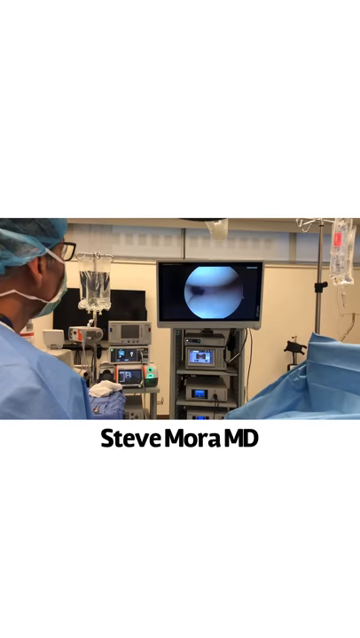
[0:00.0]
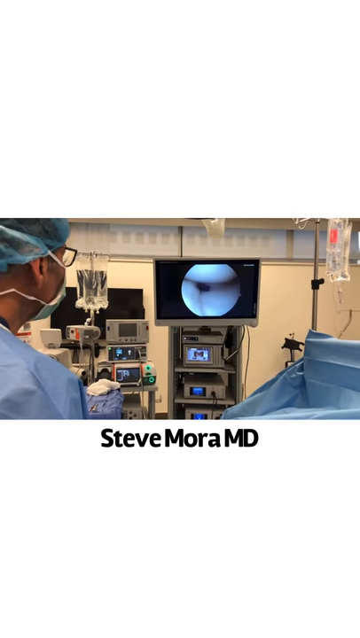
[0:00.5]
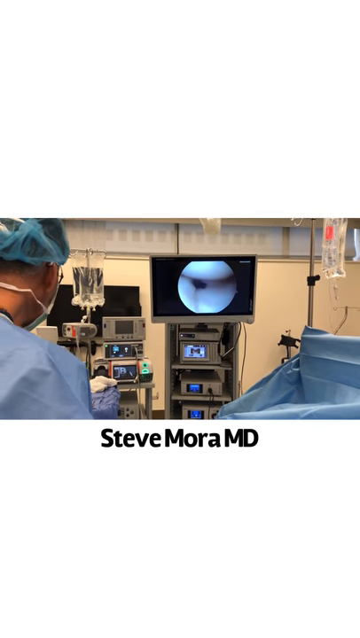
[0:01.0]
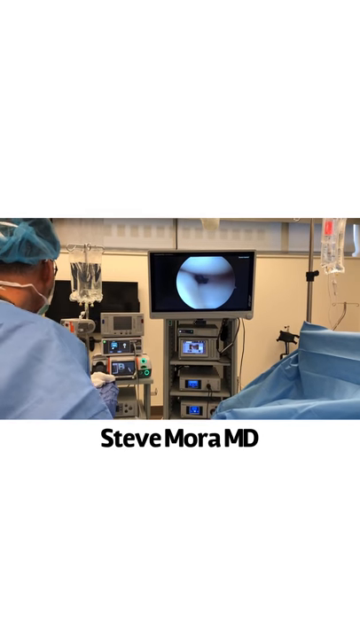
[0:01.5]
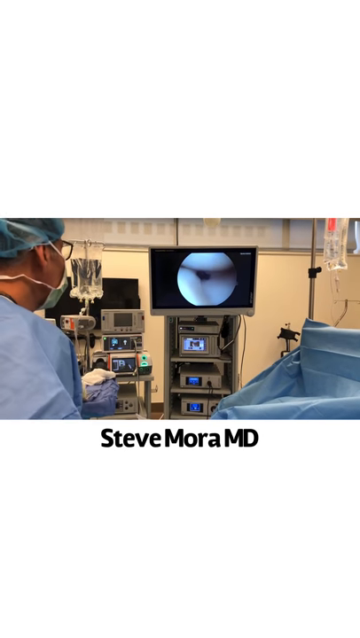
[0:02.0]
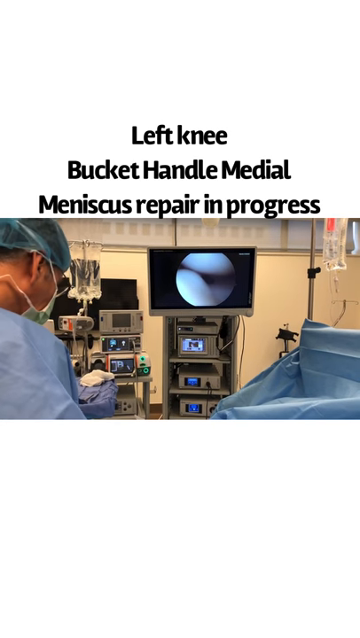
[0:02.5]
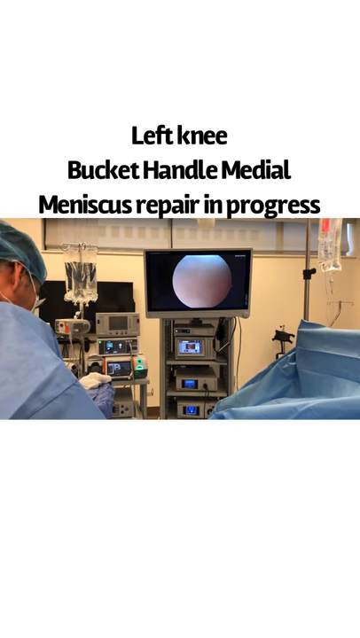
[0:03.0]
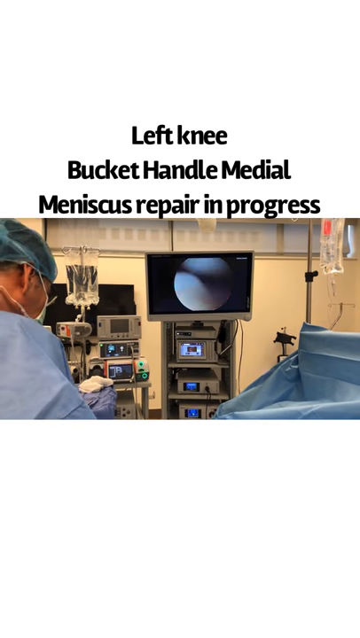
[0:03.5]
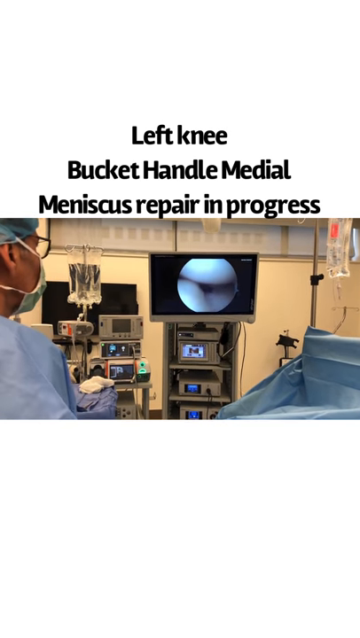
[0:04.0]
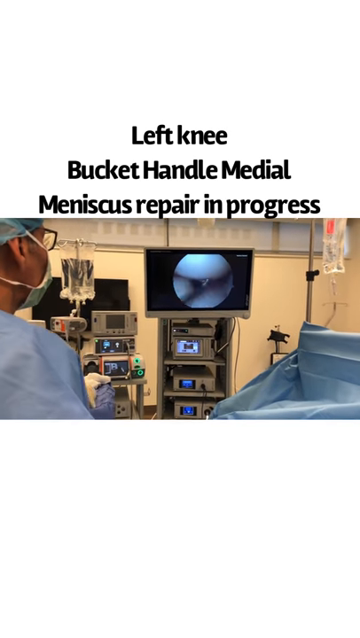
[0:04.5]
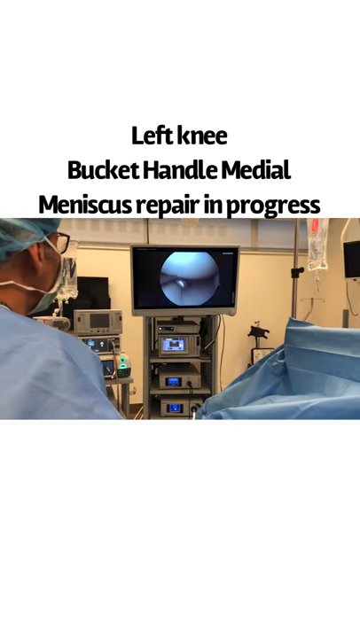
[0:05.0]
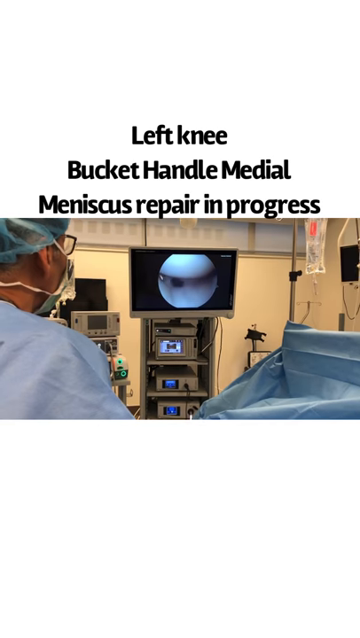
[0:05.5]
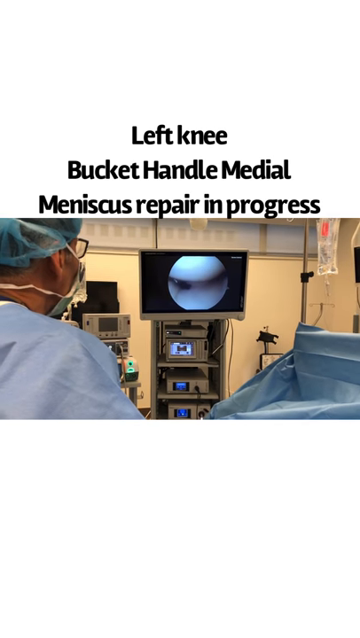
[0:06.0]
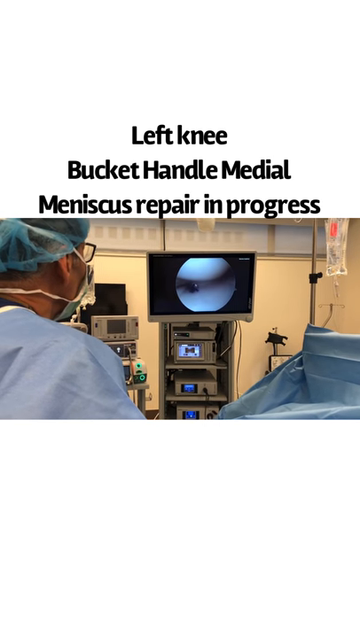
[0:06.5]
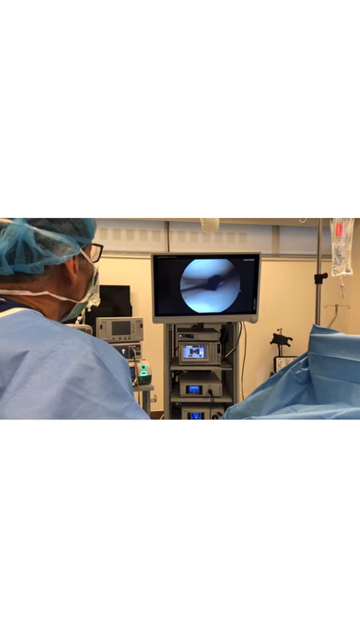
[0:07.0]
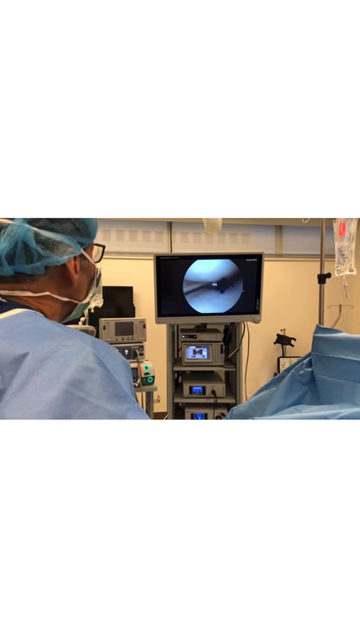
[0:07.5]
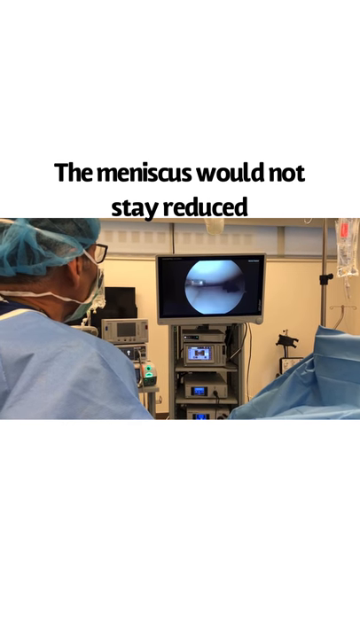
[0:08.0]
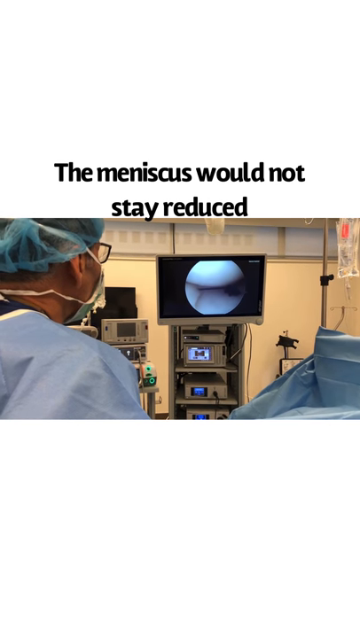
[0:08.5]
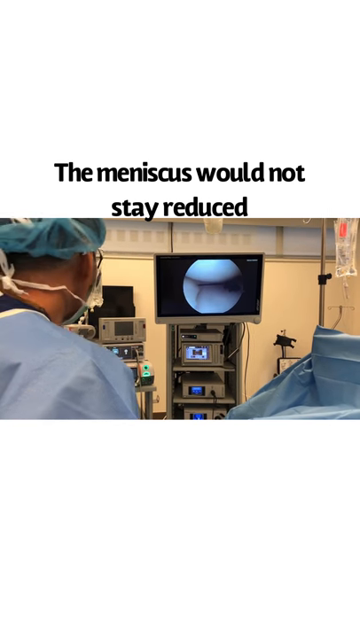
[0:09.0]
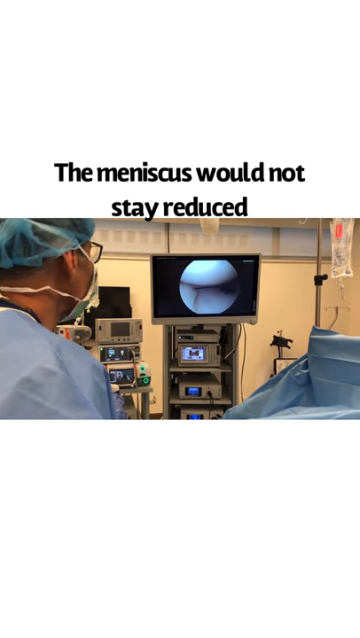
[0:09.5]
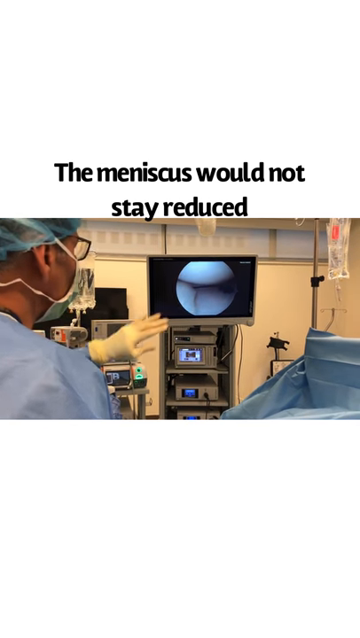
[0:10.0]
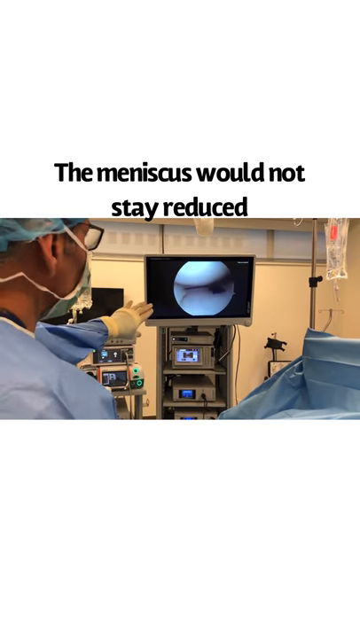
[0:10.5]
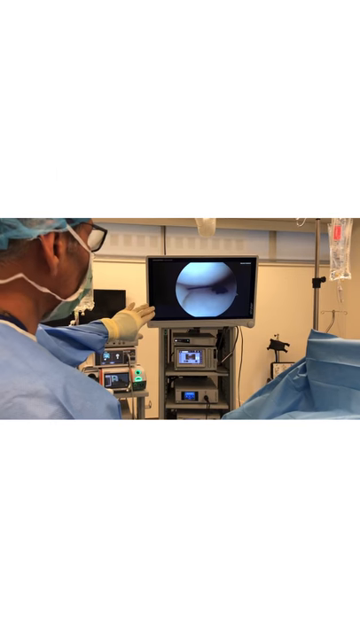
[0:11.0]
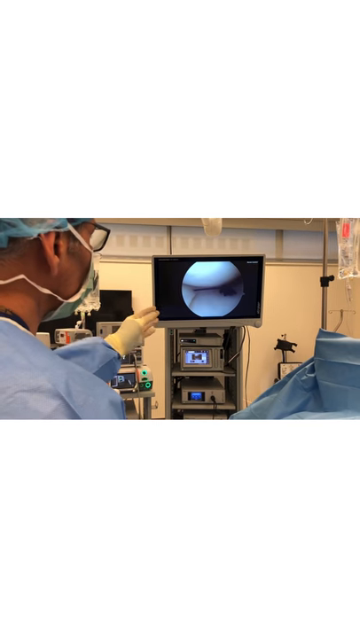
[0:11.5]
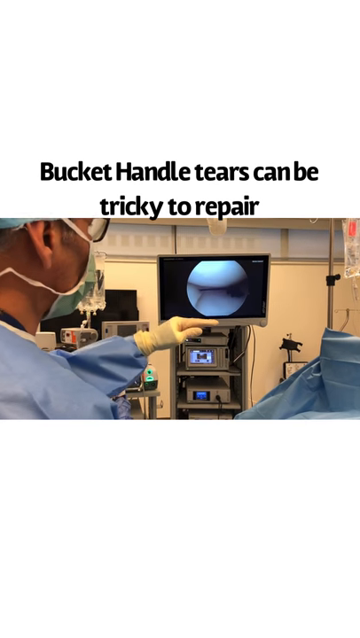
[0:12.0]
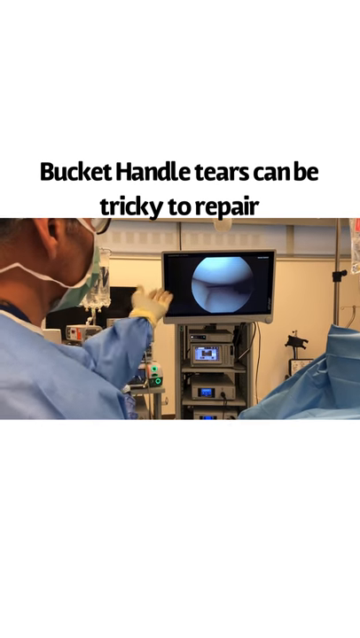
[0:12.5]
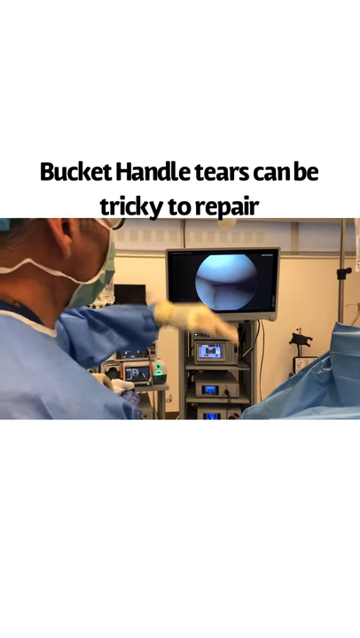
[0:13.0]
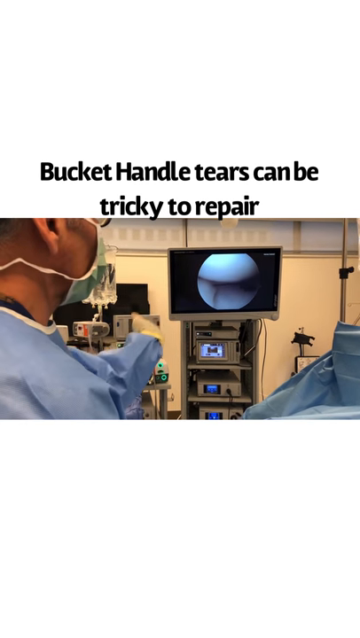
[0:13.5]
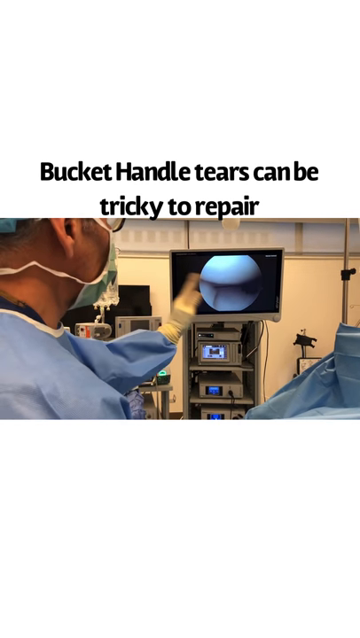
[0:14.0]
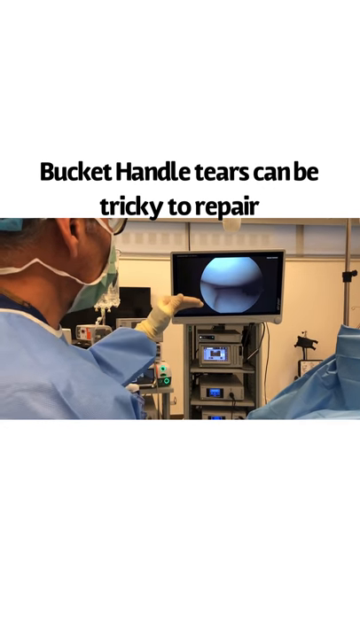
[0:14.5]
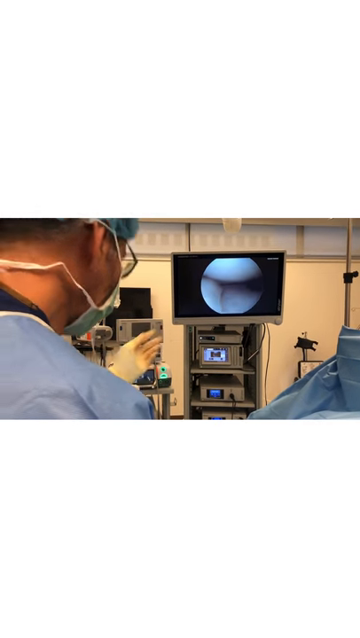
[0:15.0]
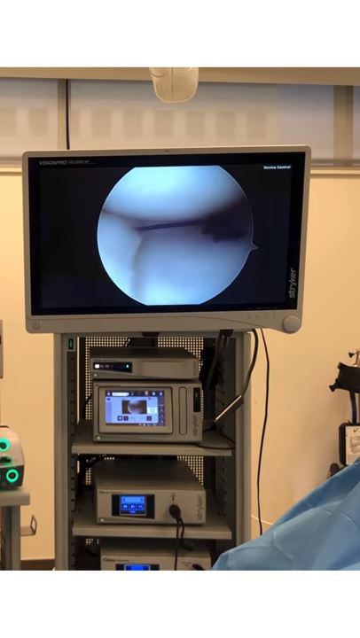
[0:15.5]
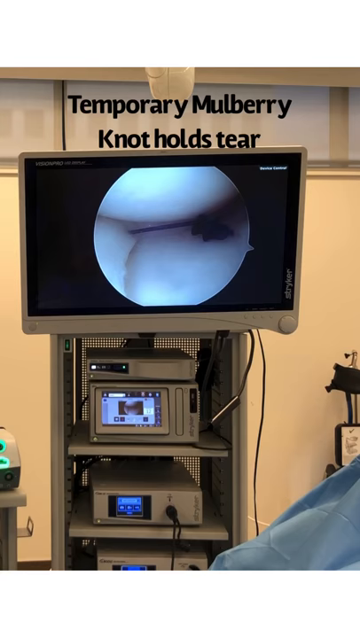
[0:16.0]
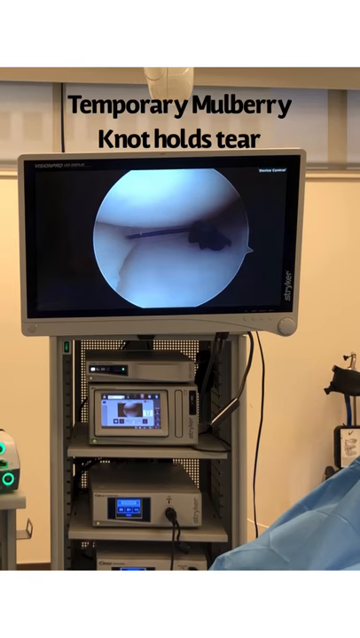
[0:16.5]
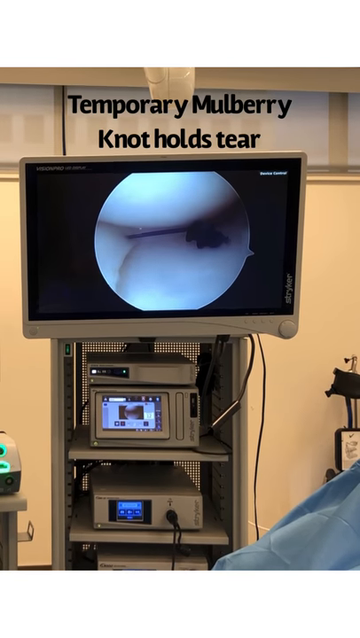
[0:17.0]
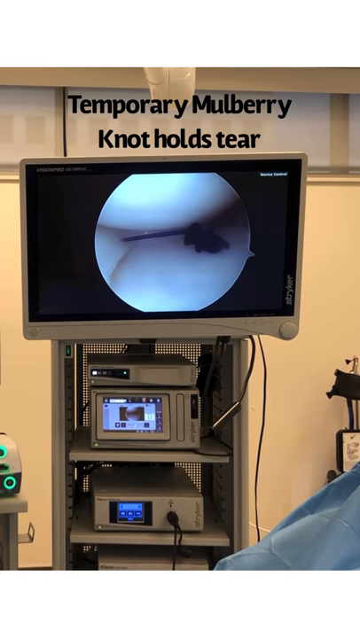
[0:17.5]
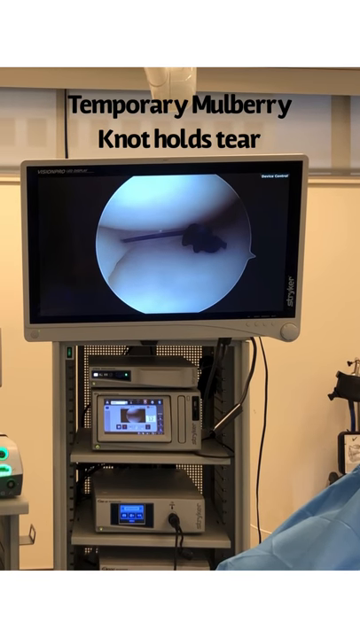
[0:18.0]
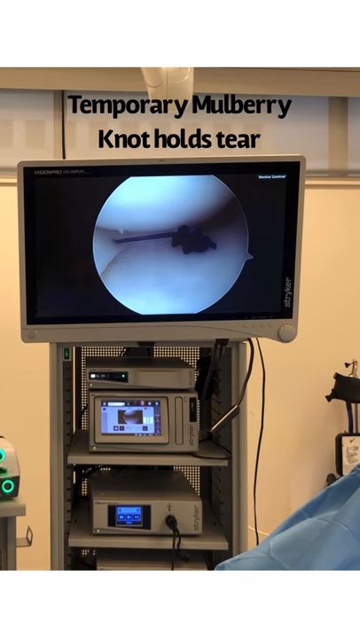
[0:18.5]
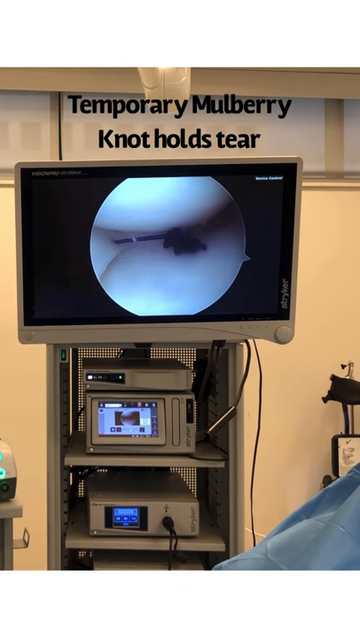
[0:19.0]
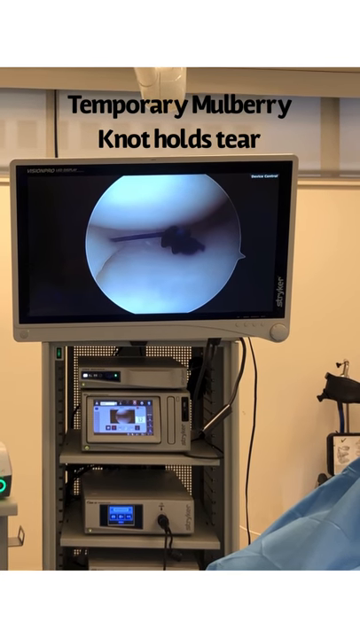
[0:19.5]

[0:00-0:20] A man wearing blue surgical scrubs looks at a computer monitor in a surgical room. Black text on a white background beneath the video reads "Steve Mora, MD." The man seems to be performing a surgical procedure, and text at the top labels it "left bucket handle medial meniscus repair in progress." The monitor shows a small zoomed-in camera view and two different surgical tools that seem to be interacting with the internal structure of the person being operated on. Text then appears at the top reading "the meniscus would not stay reduced." The man points with a gloved hand toward the camera screen, then moves his hand first palm downward and then palm upward. Text appears reading "bucket handle tears can be tricky to repair," and he waves his hand back and forth, turning the palm up and down over and over. The camera then zooms in on the computer monitor, which shows a black mass between two white masses, with text reading "temporary mulberry knot holds tear."